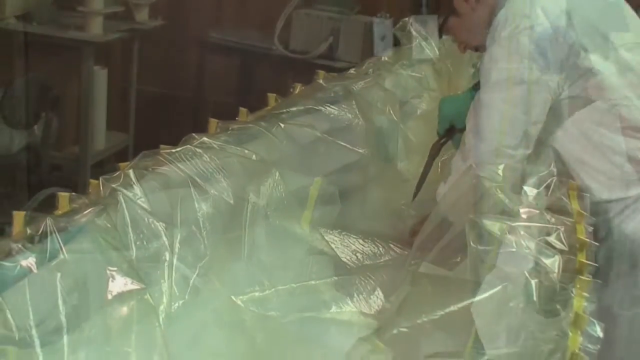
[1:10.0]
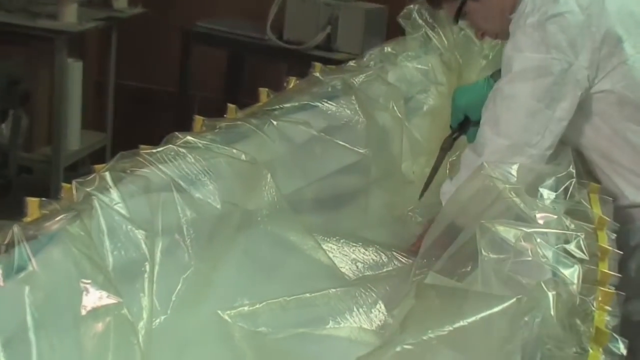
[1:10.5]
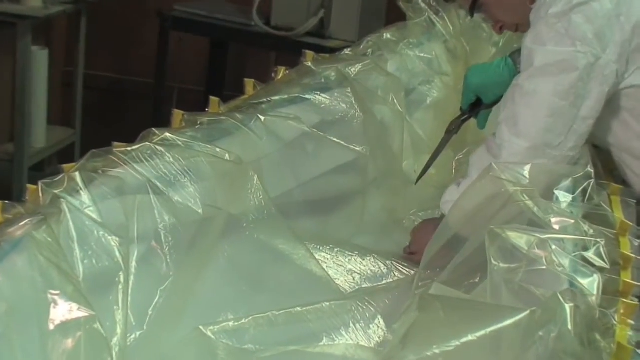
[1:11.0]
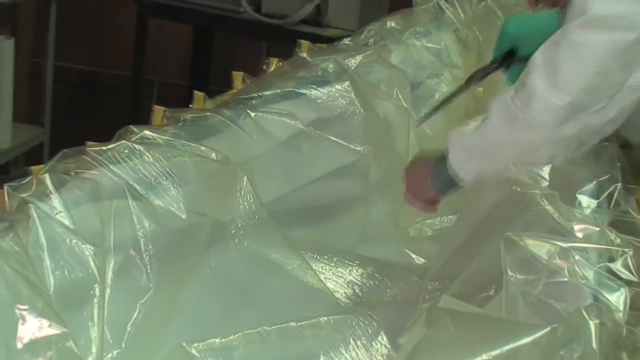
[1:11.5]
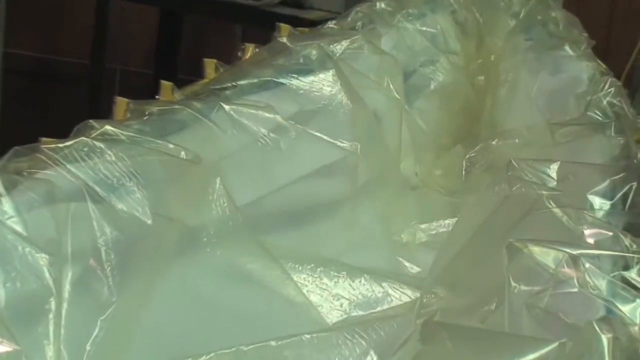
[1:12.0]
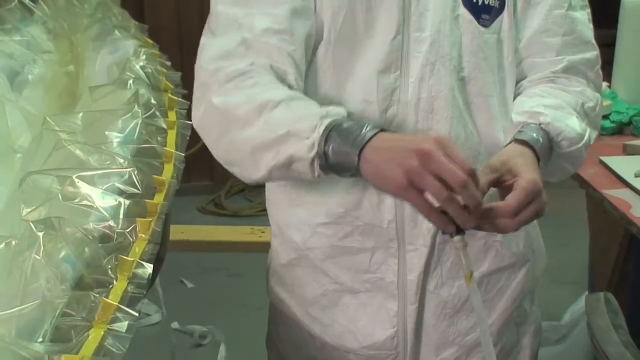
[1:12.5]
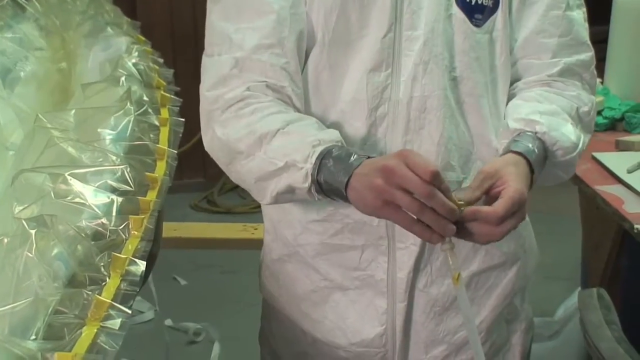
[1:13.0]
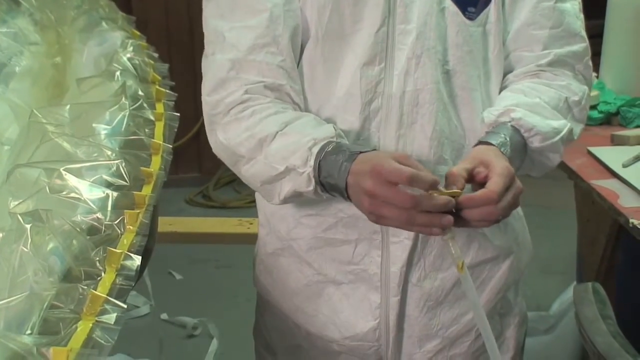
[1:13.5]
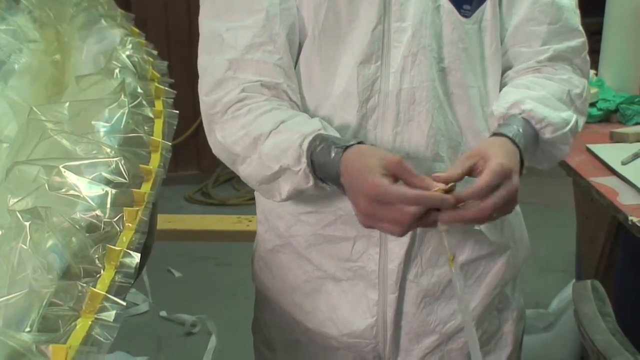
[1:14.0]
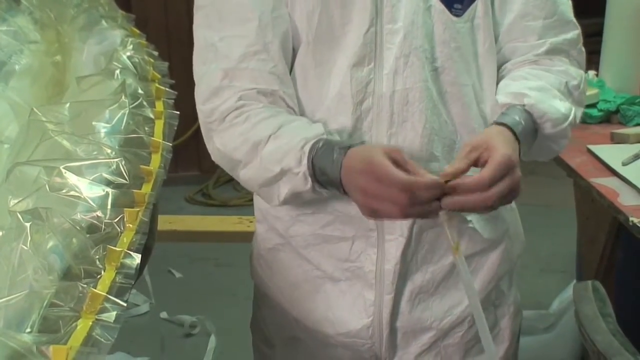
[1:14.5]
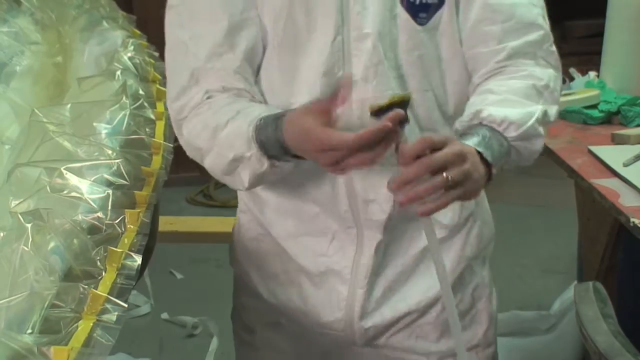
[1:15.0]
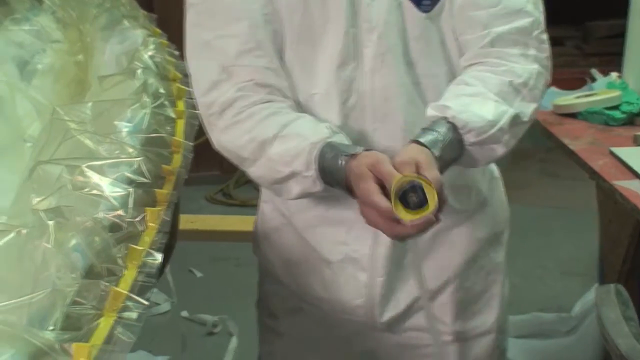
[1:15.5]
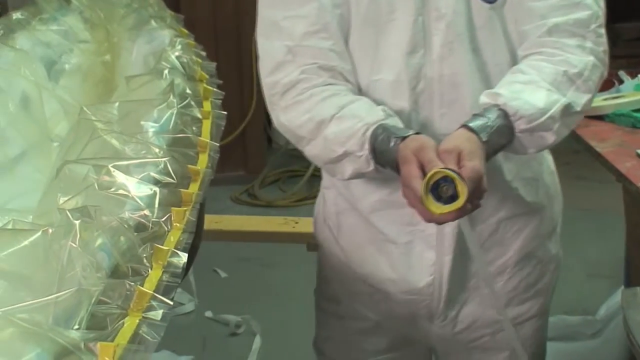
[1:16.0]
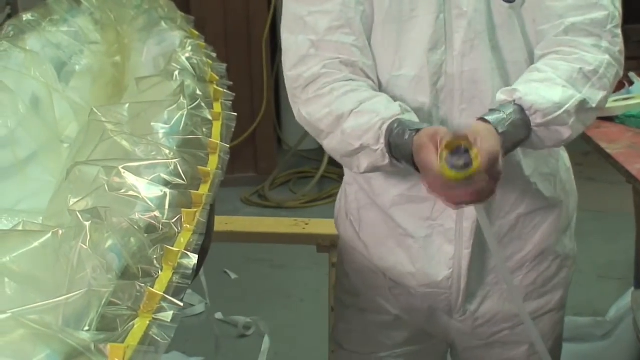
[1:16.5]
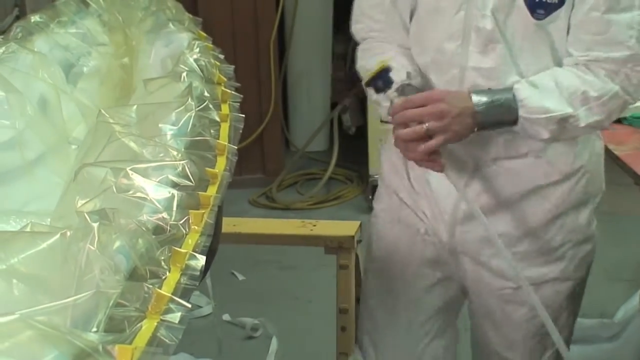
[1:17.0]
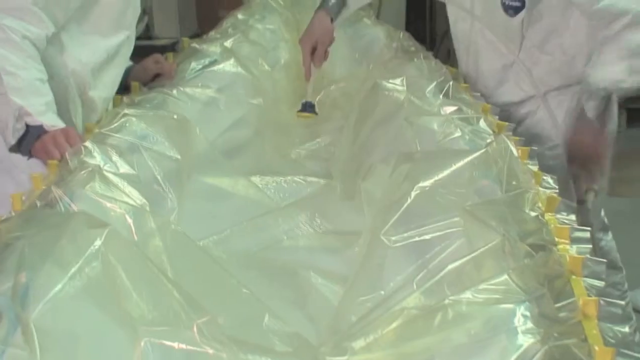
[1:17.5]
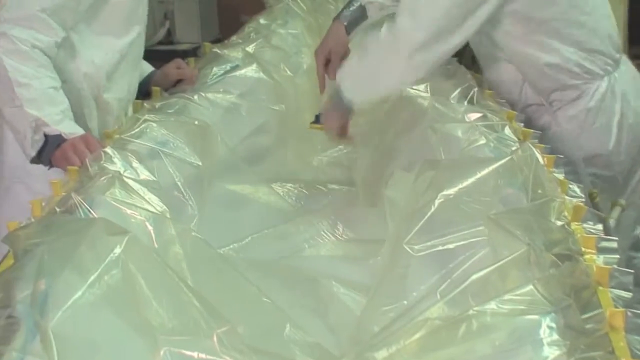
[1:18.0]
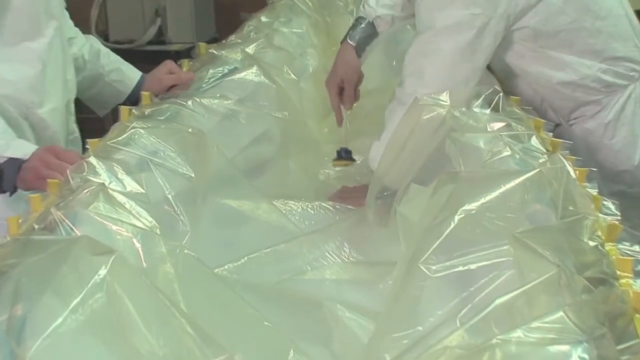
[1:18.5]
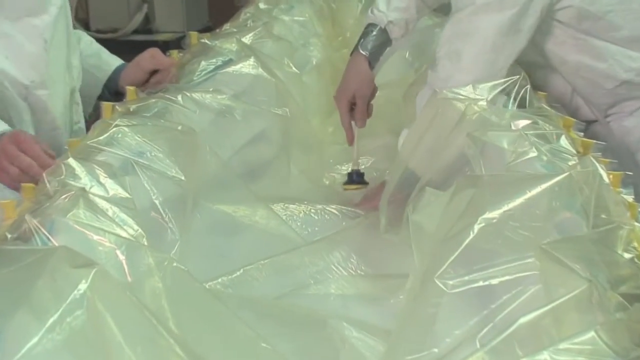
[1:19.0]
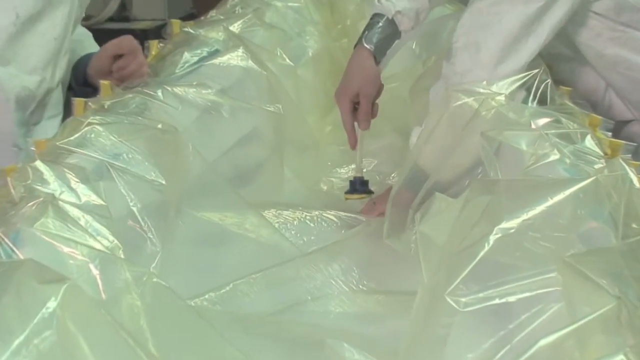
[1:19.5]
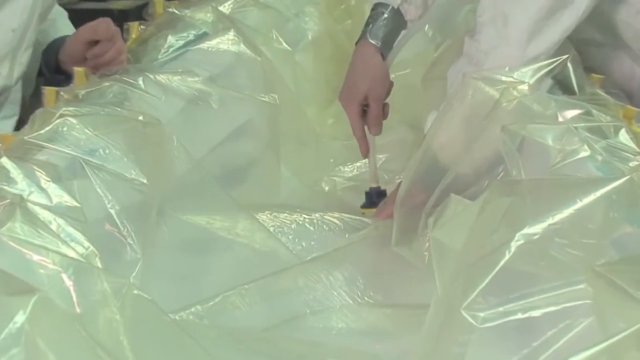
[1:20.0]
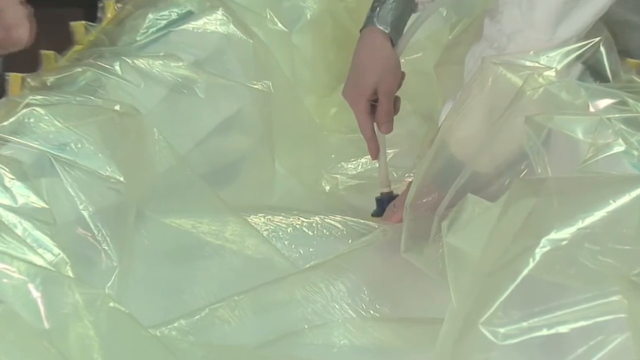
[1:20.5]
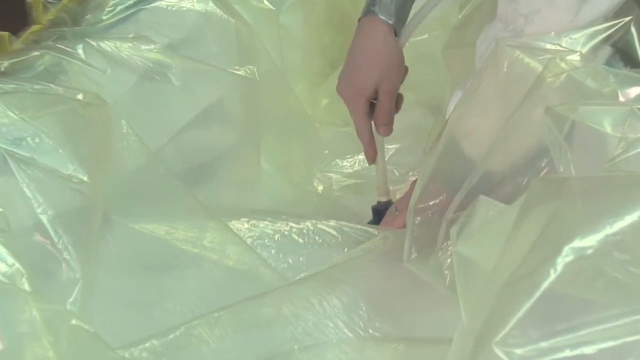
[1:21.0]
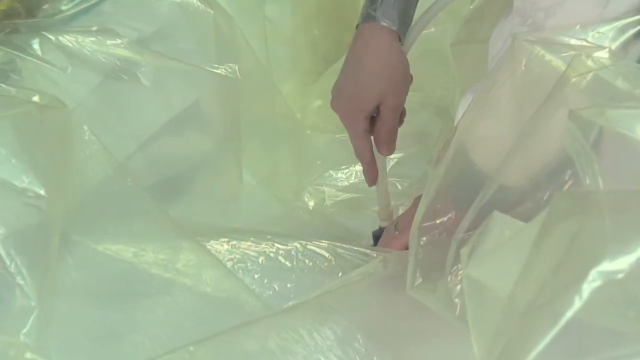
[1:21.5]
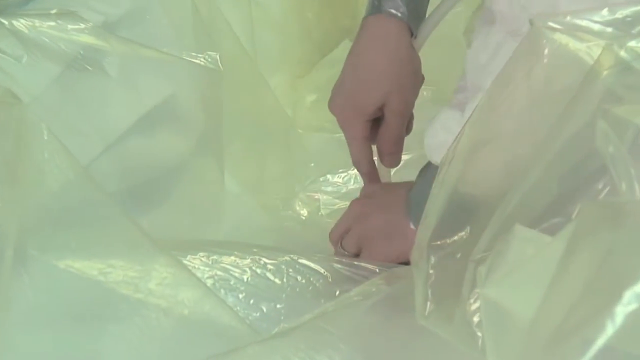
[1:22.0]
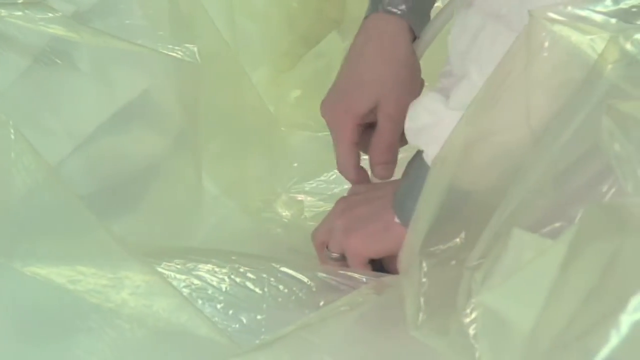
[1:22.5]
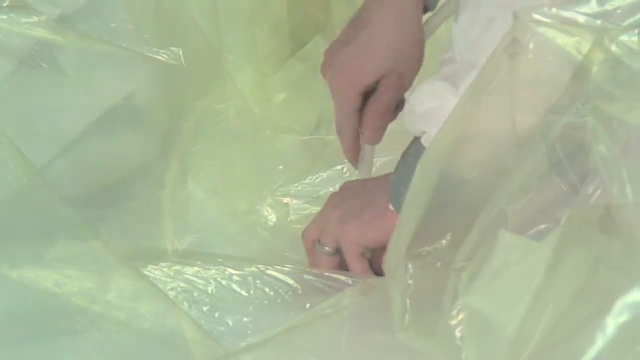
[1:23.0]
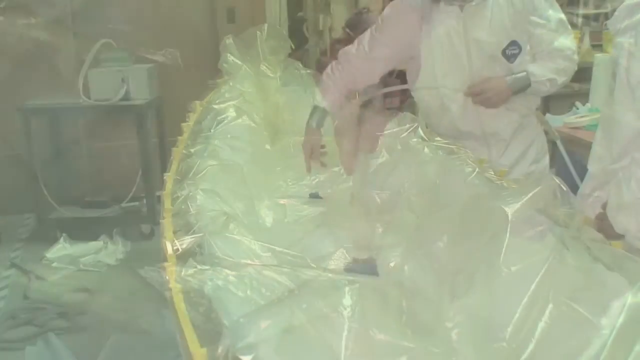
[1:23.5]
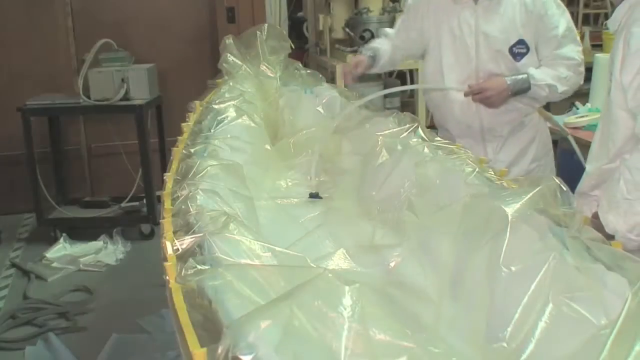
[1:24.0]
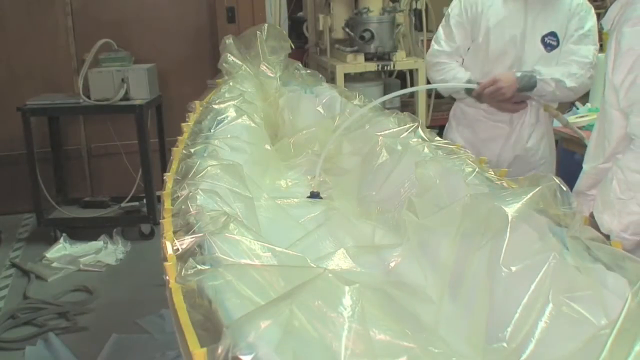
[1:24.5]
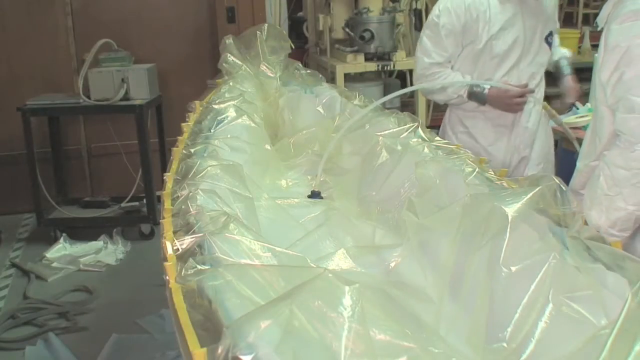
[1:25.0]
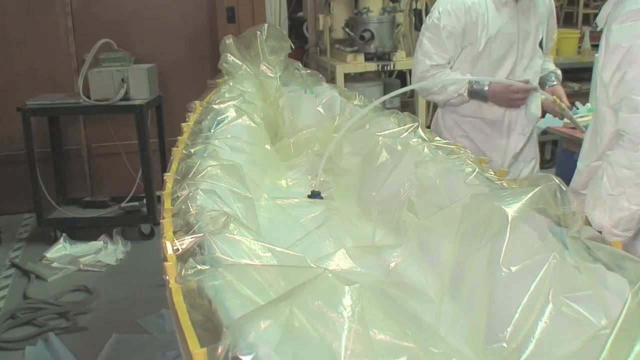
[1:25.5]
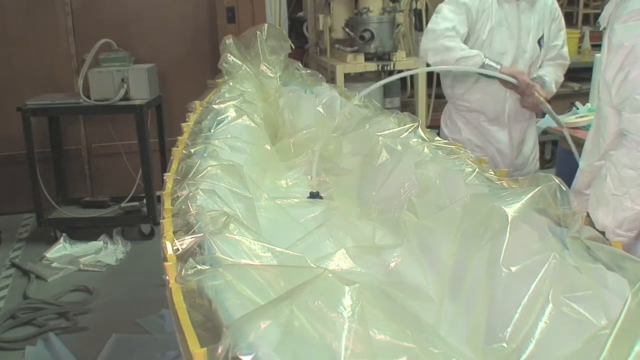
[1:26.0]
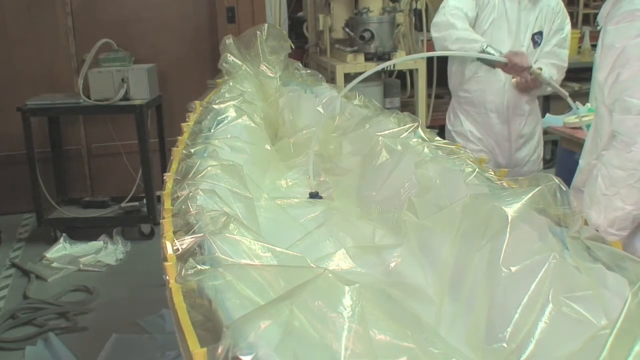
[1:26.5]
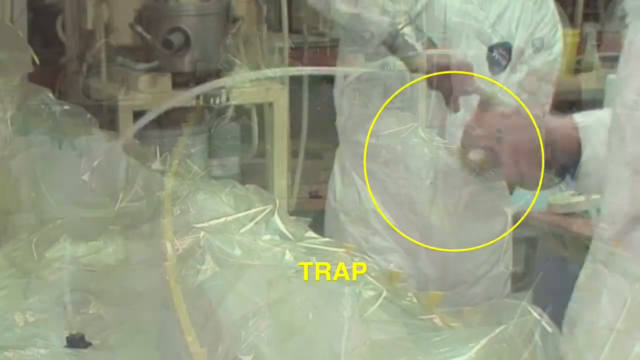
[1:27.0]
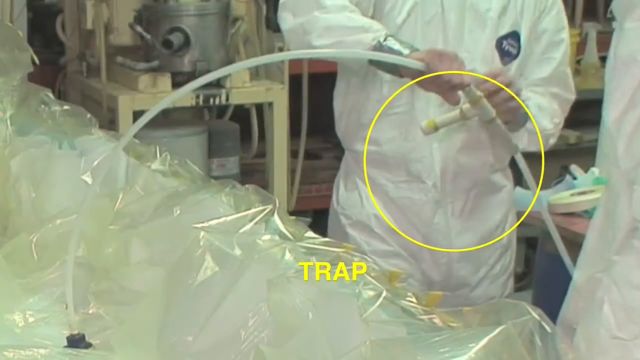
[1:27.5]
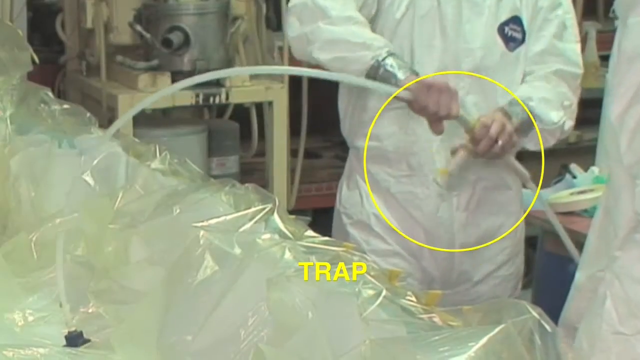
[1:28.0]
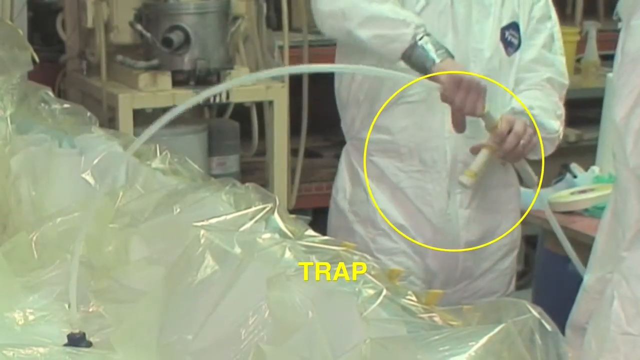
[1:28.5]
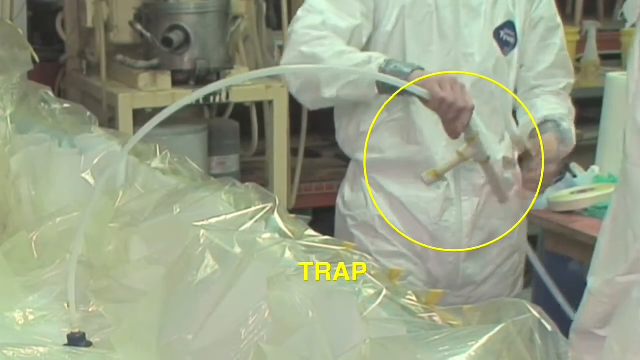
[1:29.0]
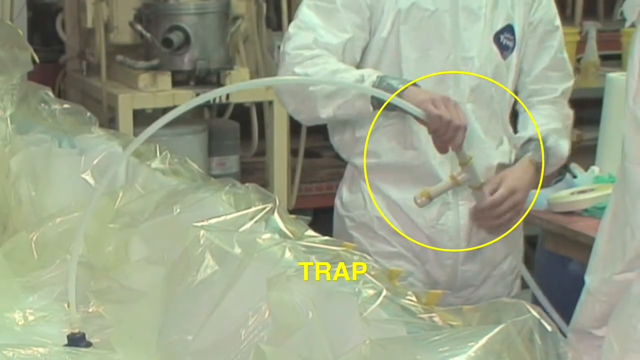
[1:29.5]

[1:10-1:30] The man, wearing plastic gloves and holding a nozzle in his right hand, leans over into the middle of the canoe and points the nozzle into it. He then holds up a pipe that looks to be plastic and puts it in the middle of the canoe, inserting and screwing it in. A person next to him helps assemble the rest of the pipe, screwing one end of the pipe to another end. In the middle of the pipe is a shorter pipe emitting from it. Around that pipe is a yellow circle label, with a word in yellow next to it. The indoor setting has a good amount of artificial light, so everything is clear and visible, and the video is in a rectangular shape.